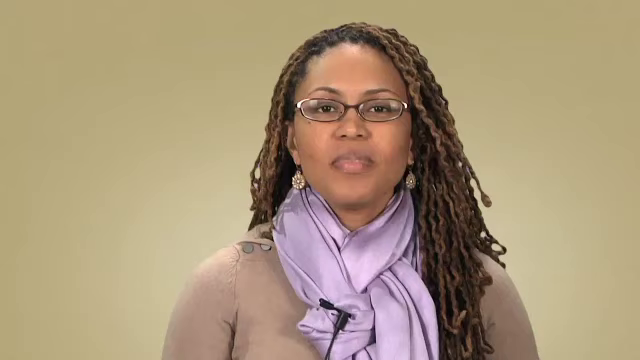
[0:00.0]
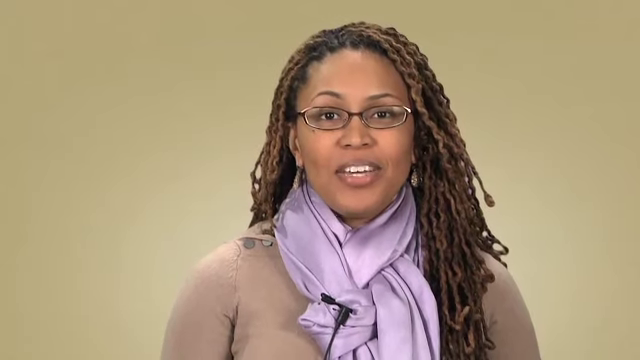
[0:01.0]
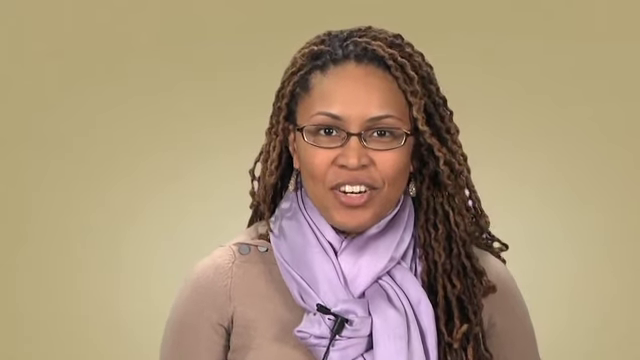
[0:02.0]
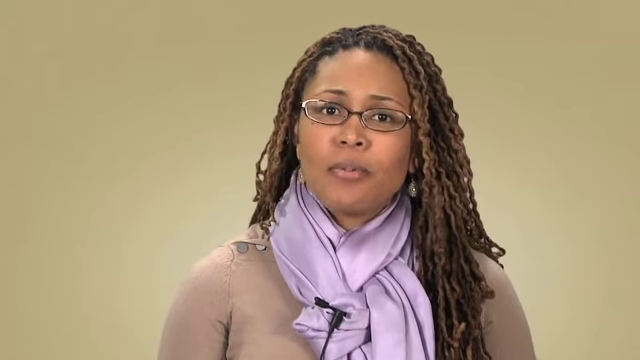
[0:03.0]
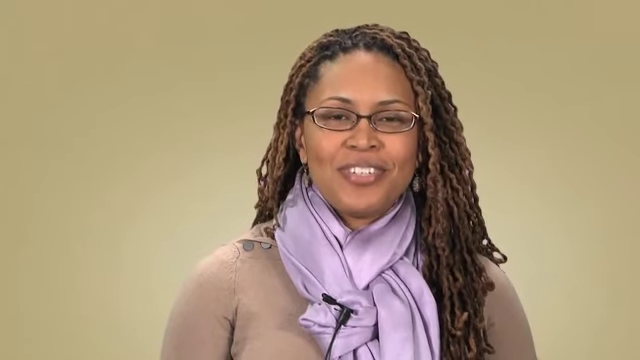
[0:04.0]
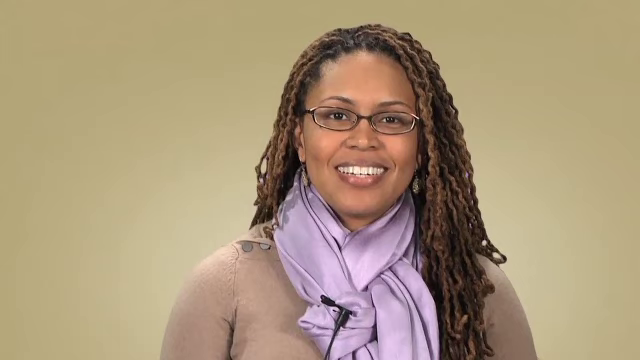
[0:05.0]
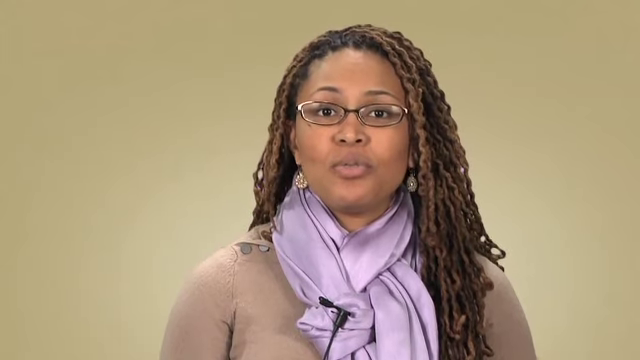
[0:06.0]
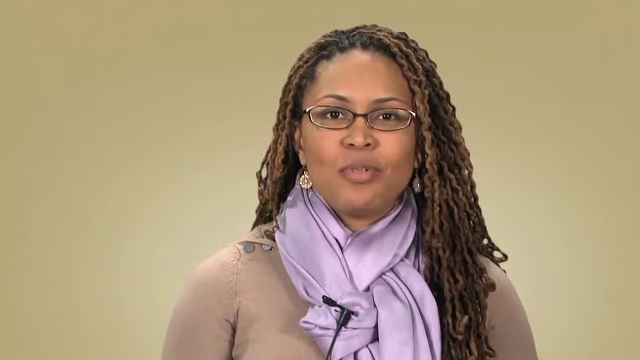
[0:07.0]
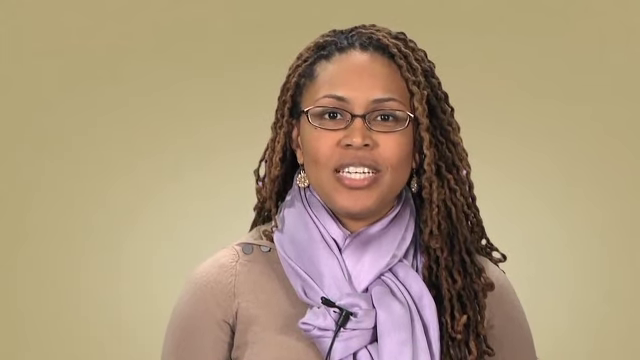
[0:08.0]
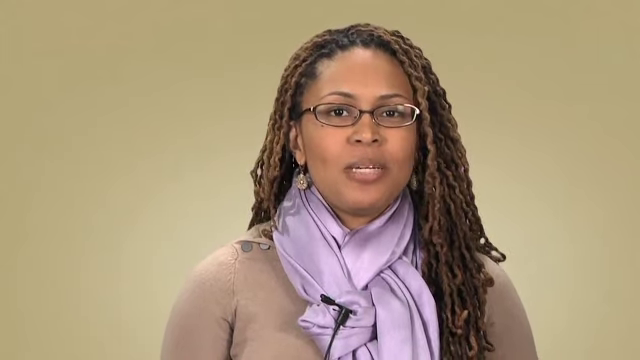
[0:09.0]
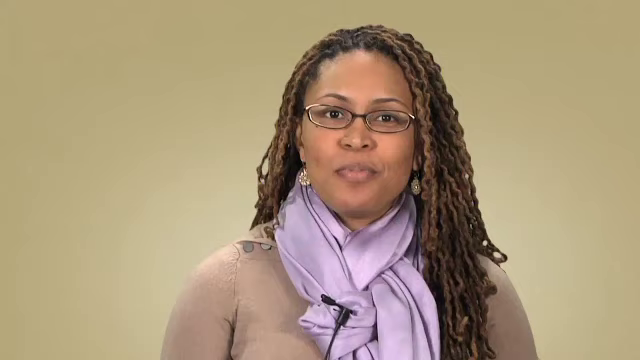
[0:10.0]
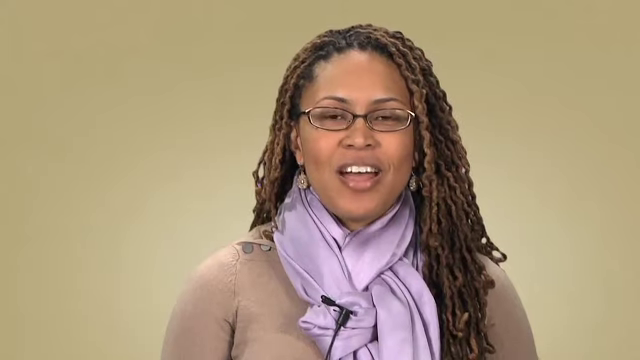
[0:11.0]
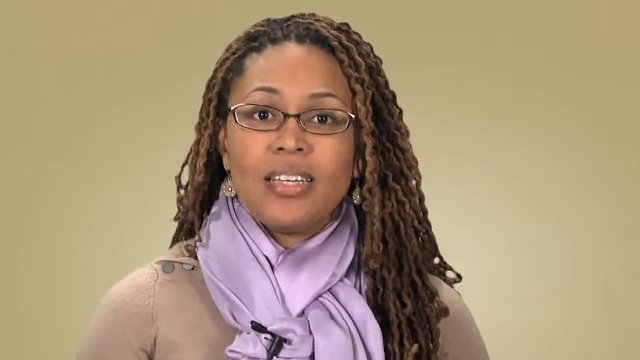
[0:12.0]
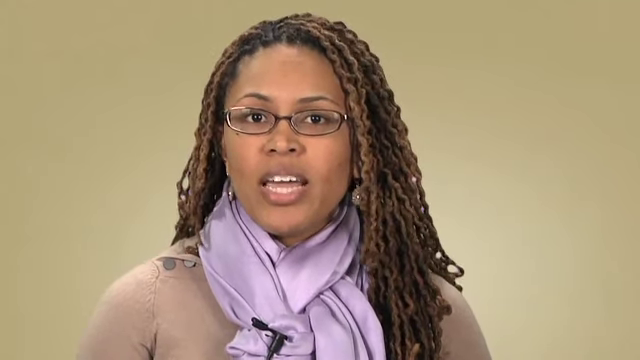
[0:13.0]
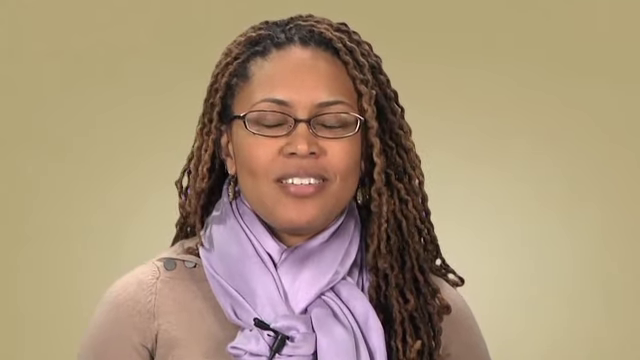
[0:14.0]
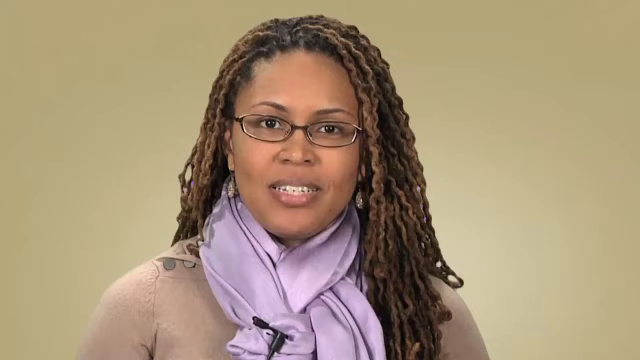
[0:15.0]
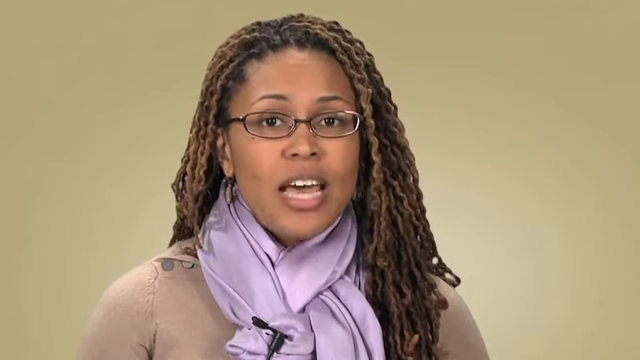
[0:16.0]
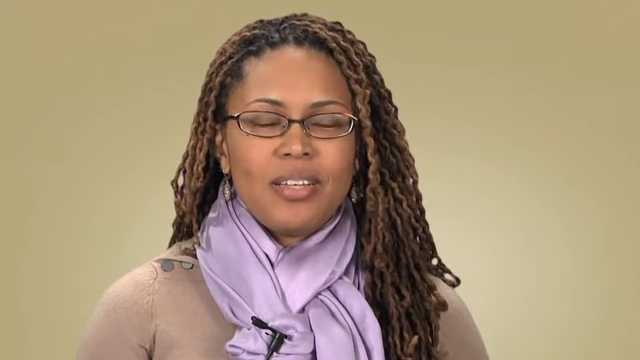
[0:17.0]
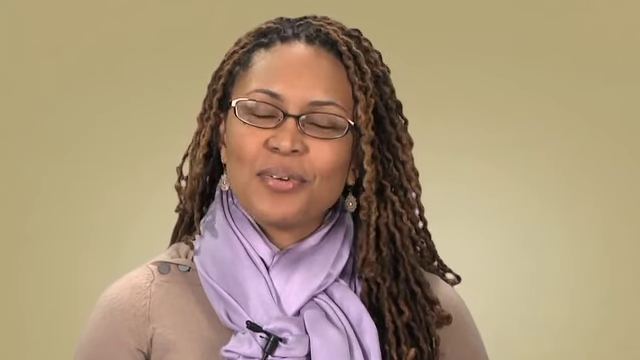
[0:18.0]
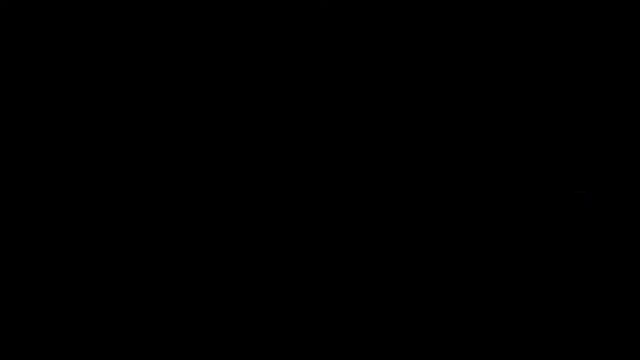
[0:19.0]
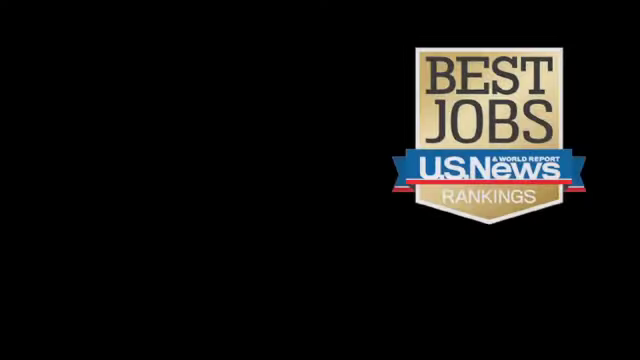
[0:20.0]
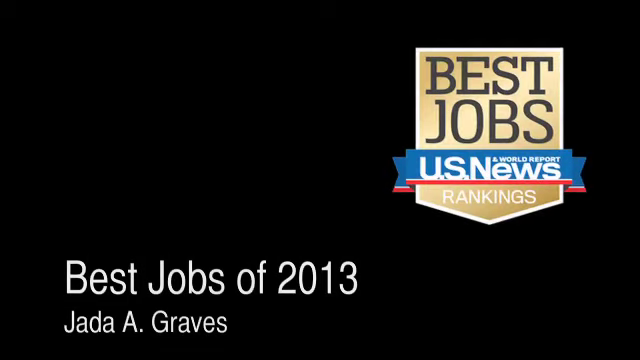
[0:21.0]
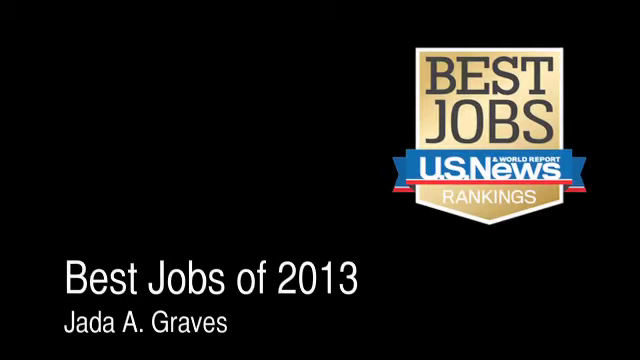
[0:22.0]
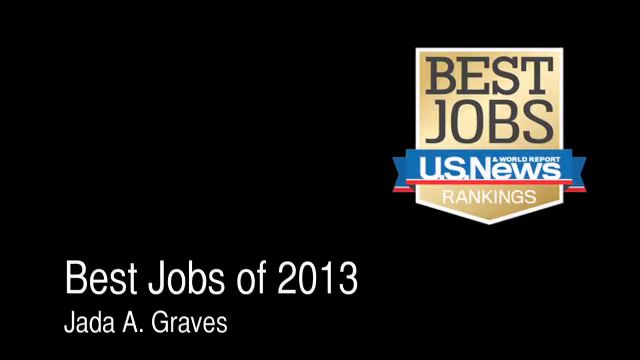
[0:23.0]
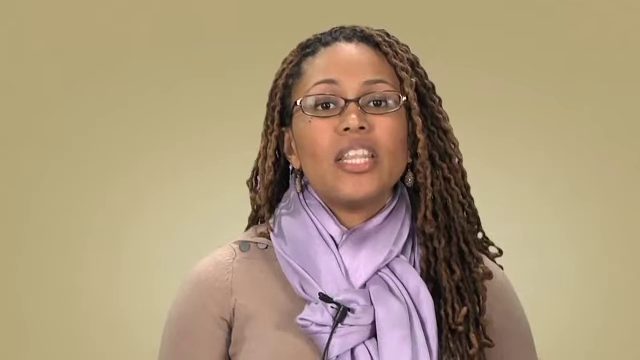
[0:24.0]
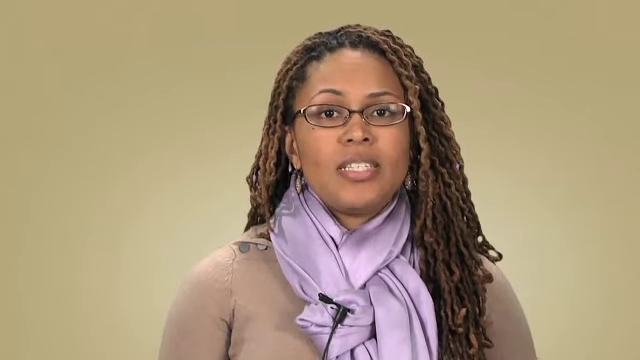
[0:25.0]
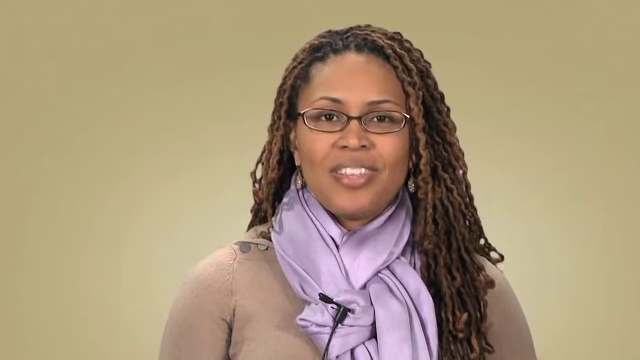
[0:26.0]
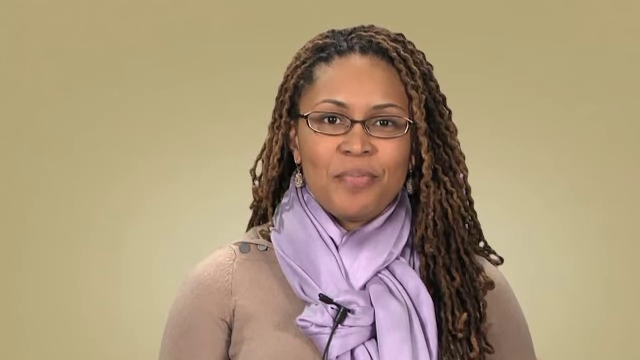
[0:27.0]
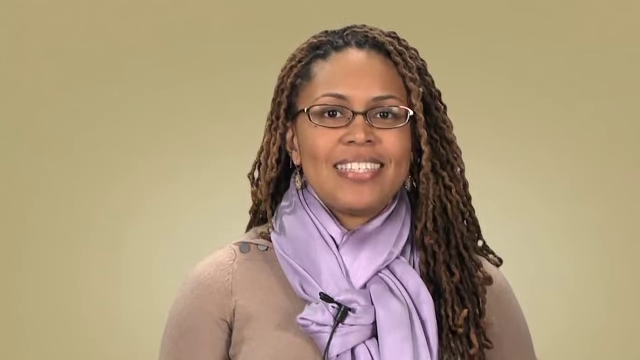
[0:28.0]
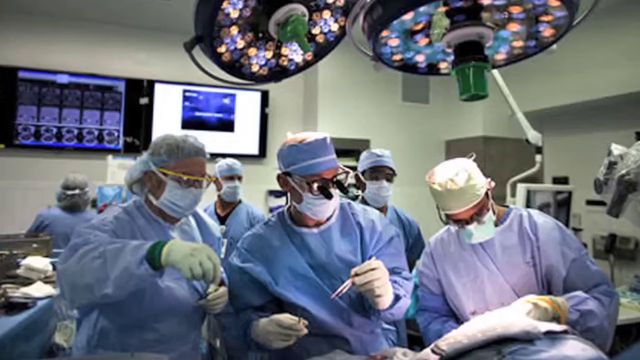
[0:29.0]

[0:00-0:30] An African-American woman wears glasses, what looks like a really thick purple scarf around her neck, a black-brown long-sleeve shirt and earrings. She starts to speak and smiles, and she appears to be wearing natural lipstick. She continues talking, moving her head back and forth. The video then cuts to a website or slide reading "best jobs US news world report rankings best jobs of 2013" along with the name Jada A. Graves, who is maybe the narrator or the person talking. It returns to the woman speaking, then shows an image of three doctors who look like they are performing some type of procedure. One doctor holds instruments that look like tweezers, has blood on him, and wears glasses fitted with what look like miniature binoculars for surgery. They are all gowned up and looking at a patient.